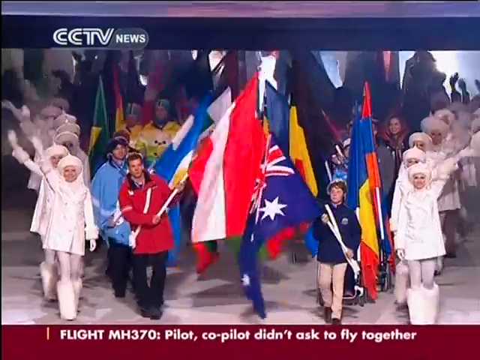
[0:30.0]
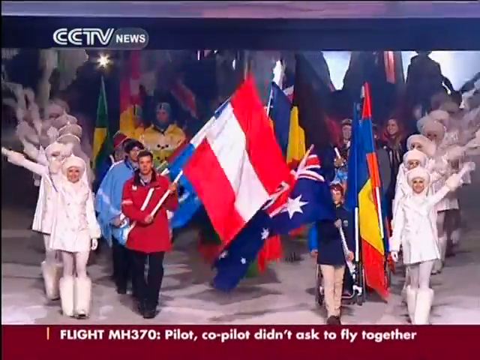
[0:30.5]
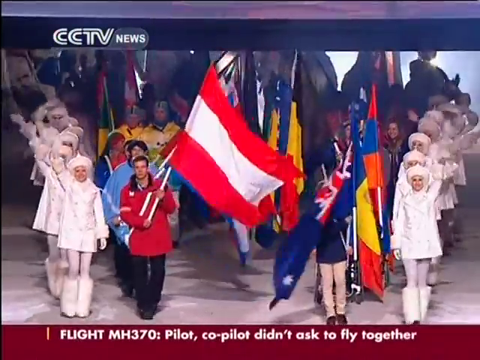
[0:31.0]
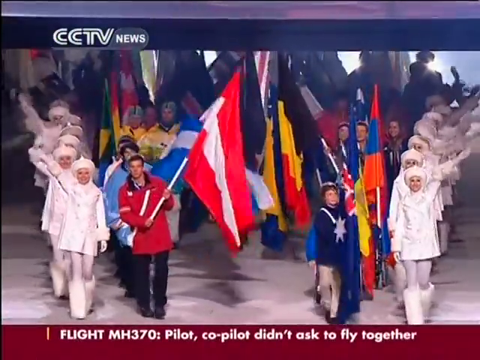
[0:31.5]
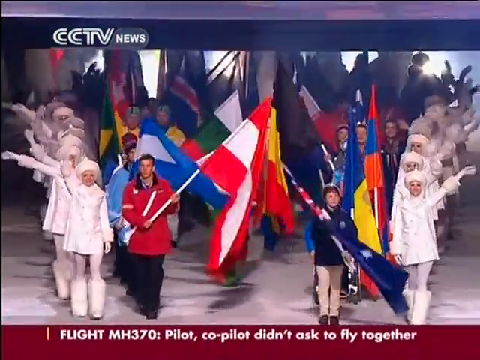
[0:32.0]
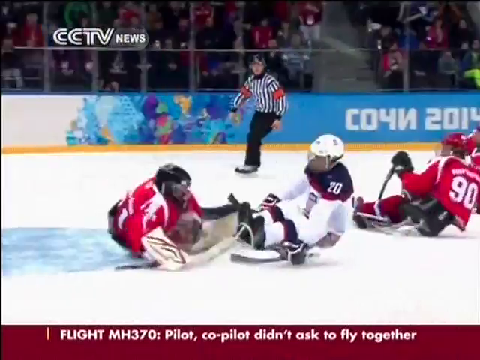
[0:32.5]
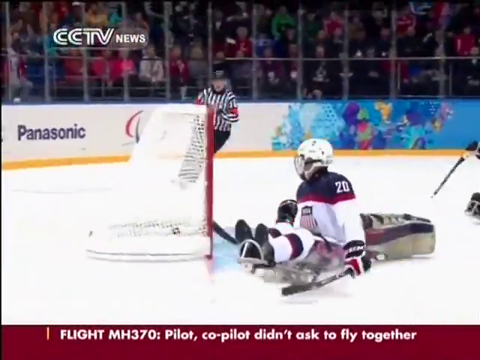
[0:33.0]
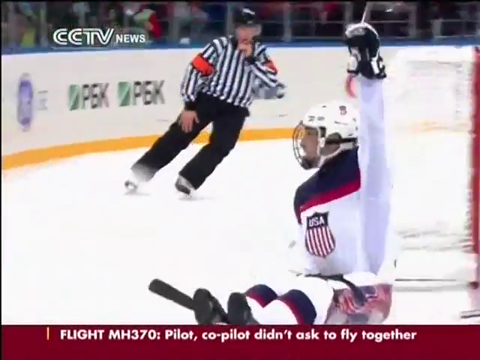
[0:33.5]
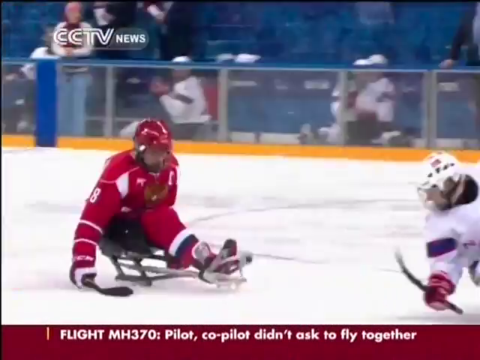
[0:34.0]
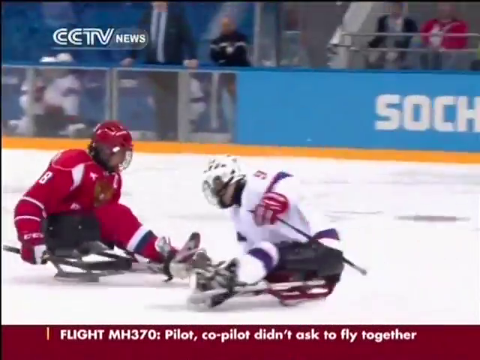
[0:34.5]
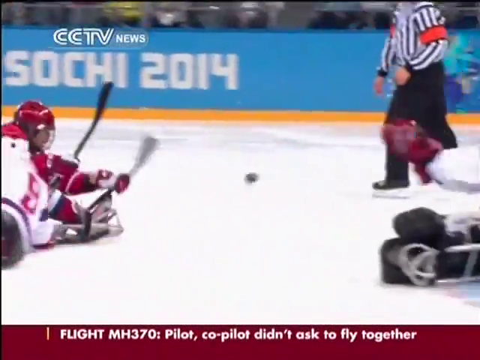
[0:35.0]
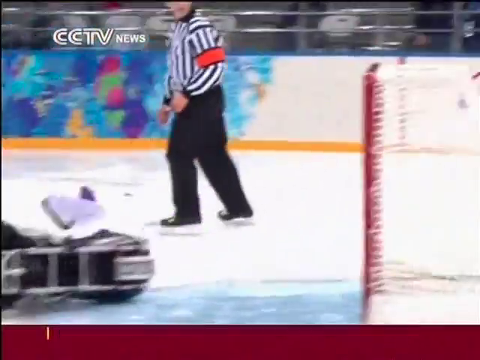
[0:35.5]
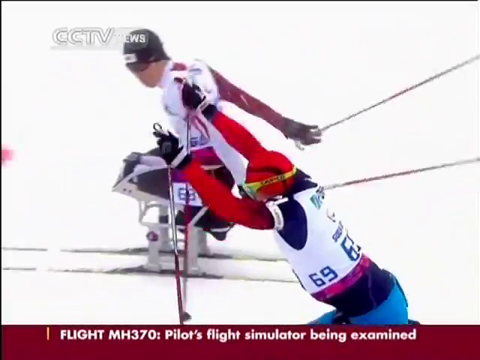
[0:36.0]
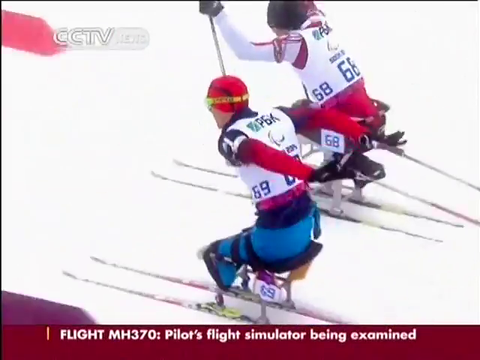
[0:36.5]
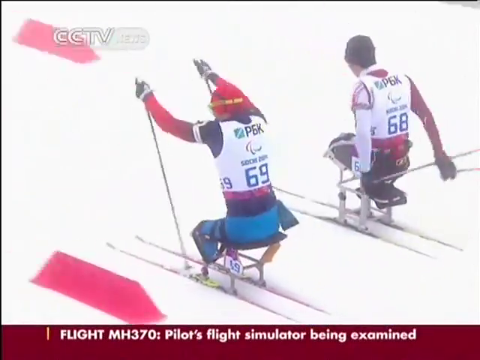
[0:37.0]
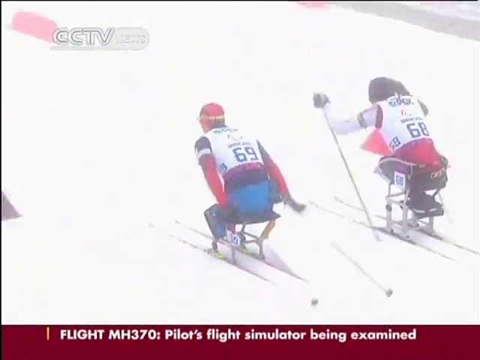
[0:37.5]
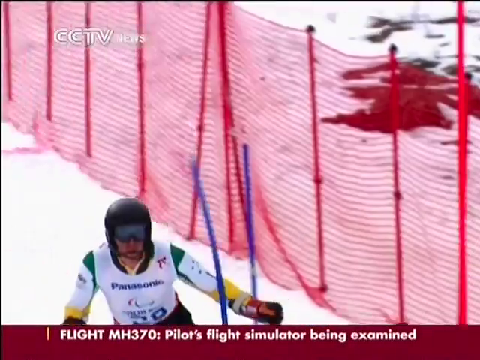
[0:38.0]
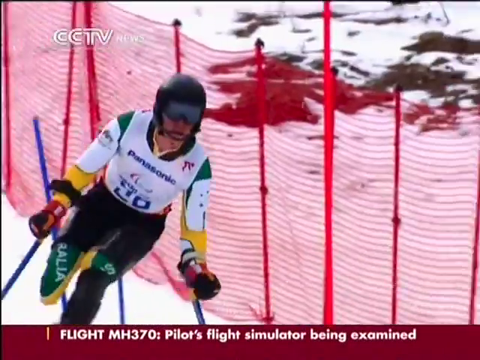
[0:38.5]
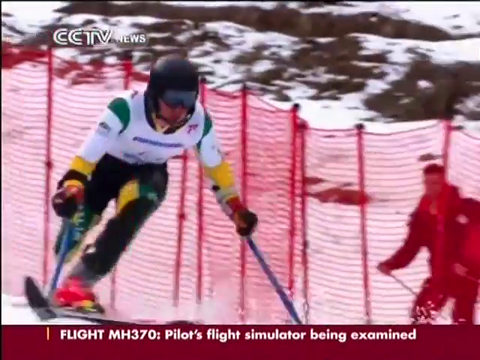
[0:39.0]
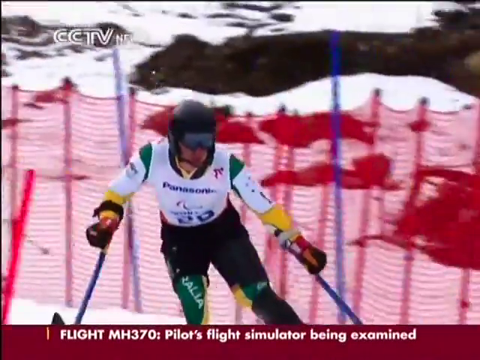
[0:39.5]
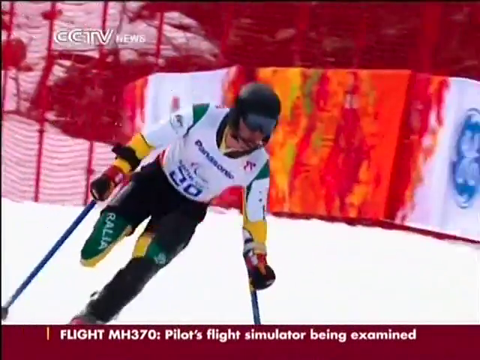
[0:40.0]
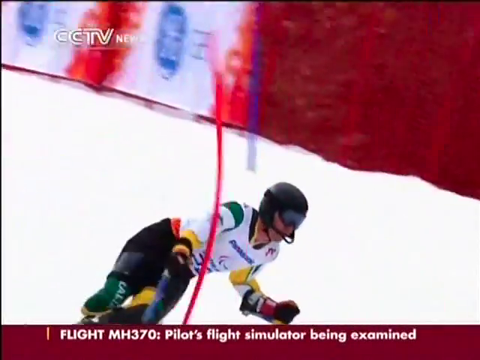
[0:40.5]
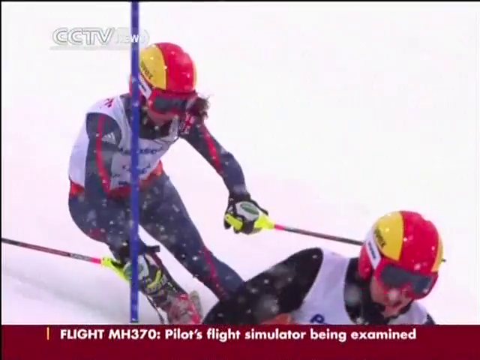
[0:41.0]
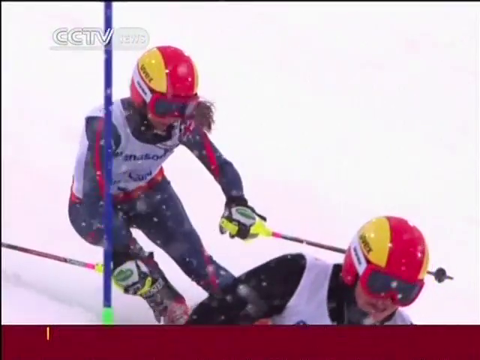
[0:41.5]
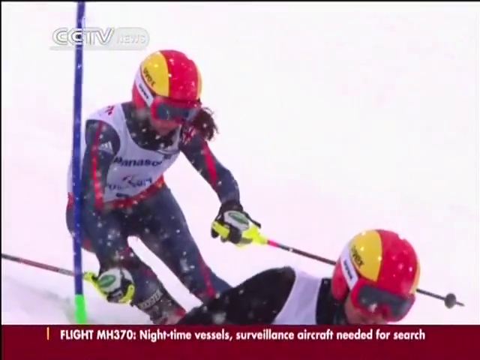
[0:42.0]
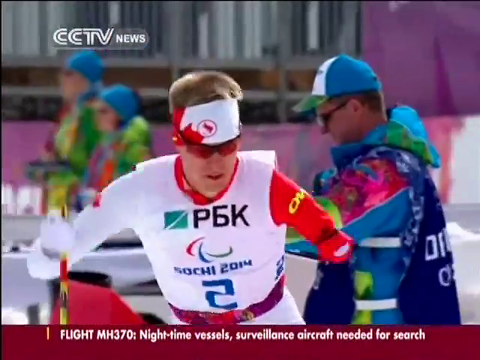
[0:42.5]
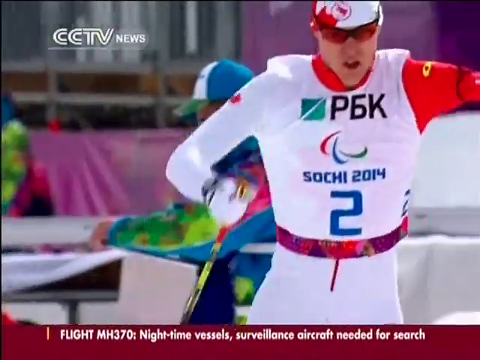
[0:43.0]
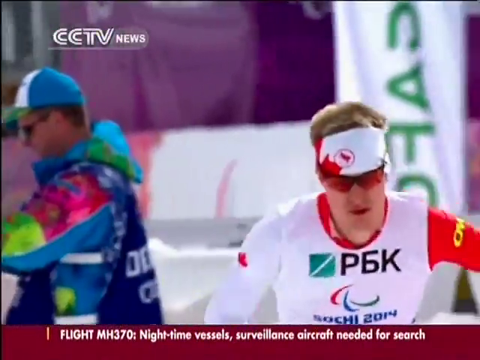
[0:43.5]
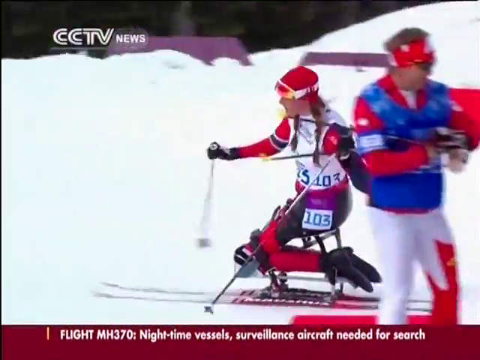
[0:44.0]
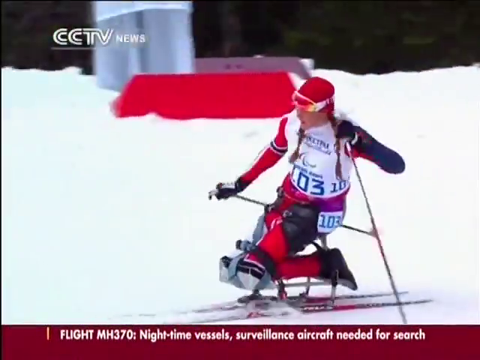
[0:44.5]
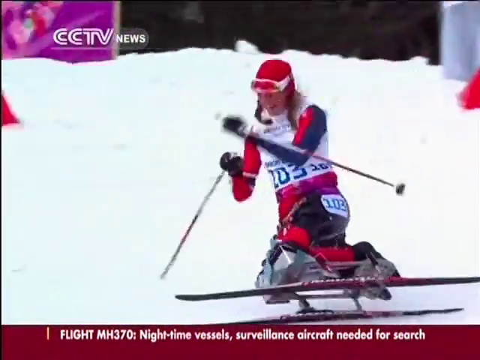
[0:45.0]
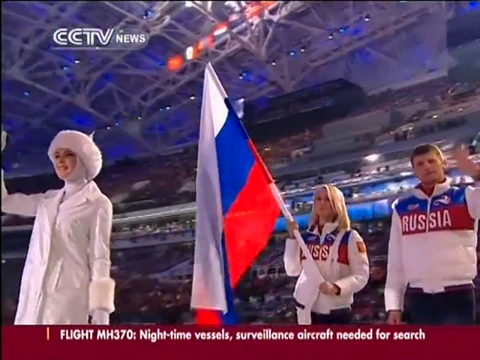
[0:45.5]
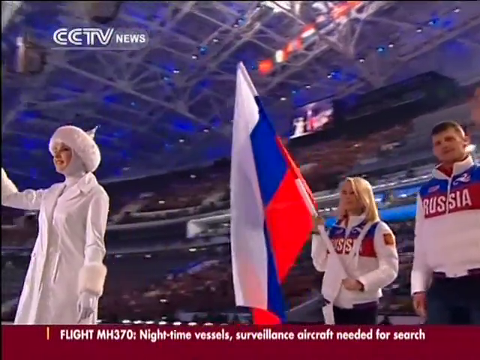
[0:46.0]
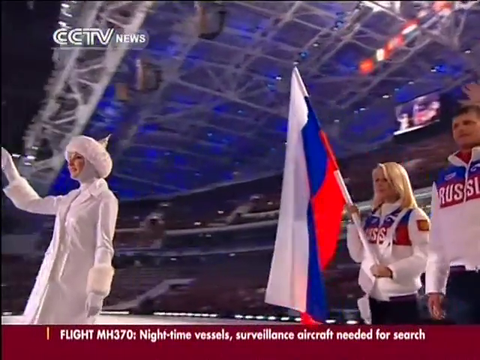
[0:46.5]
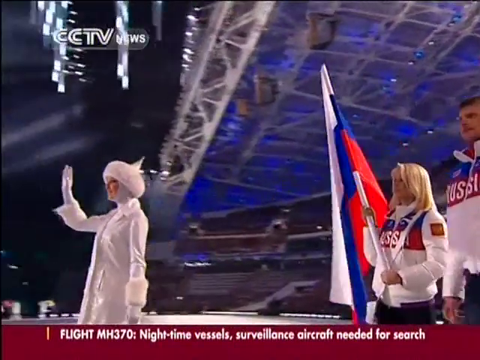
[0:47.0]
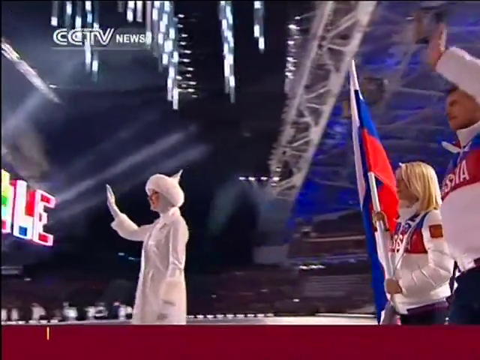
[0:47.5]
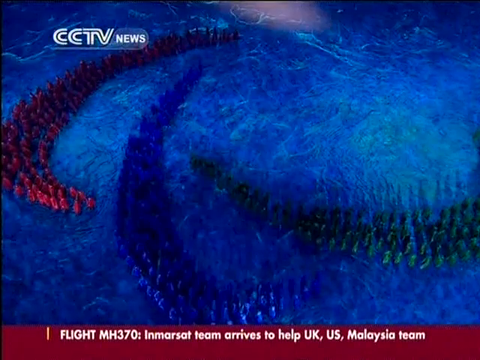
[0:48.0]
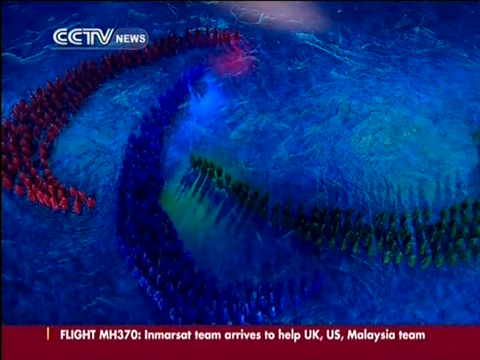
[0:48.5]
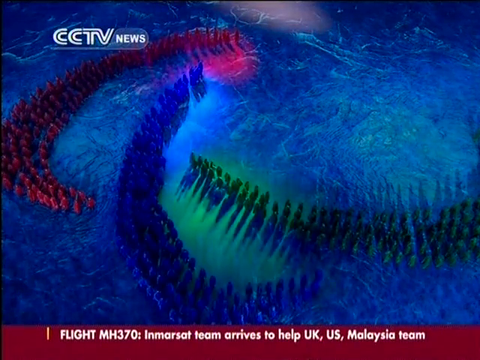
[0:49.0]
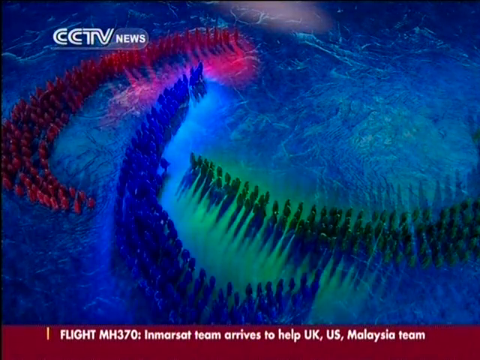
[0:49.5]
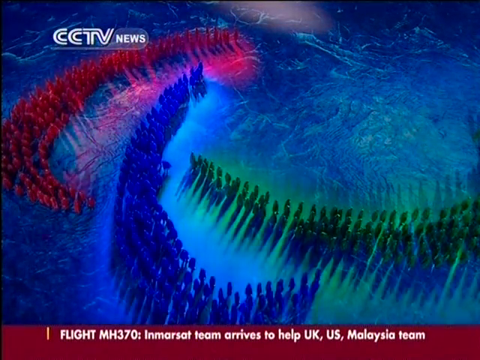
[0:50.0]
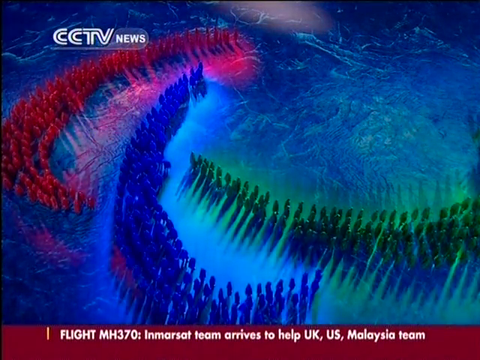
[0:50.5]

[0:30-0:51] Around 20 people walk in a ceremonial parade. Women on each side wear all white, in what look like fur ensembles, while the people in the middle wear different colored ensembles and all carry flags of different countries. The scene changes to sledge hockey: a player goes close in to the net and scores a goal, then raises his left arm in the air to celebrate, while a referee behind him to his left raises his left hand to blow the whistle. Another sledge hockey shot shows another player scoring a goal on the other team. Next, two people skiing with seats on their skis are seen from behind. Seated, they use their arms to move forward, bringing their arms up and then planting their poles in the snow to pull themselves forward, gaining speed. Brief shots of different Paralympics participants follow quickly, and then a brief glimpse of a ceremonial closing parade.